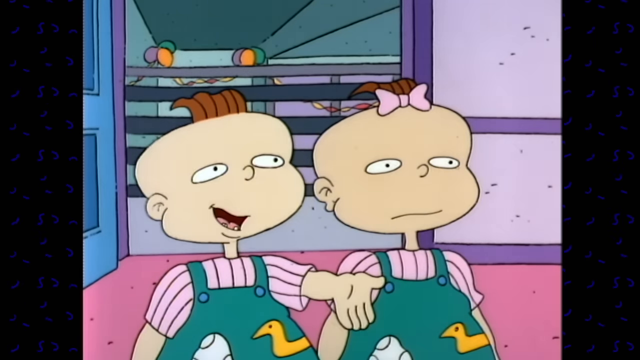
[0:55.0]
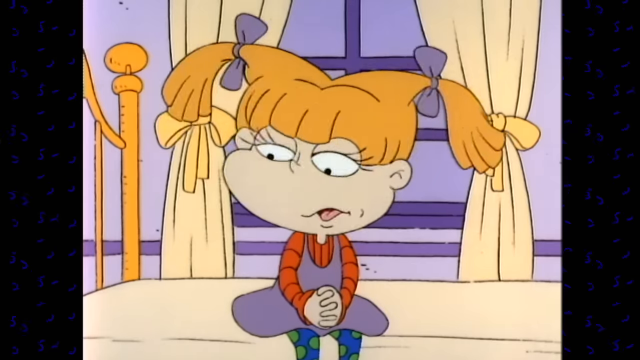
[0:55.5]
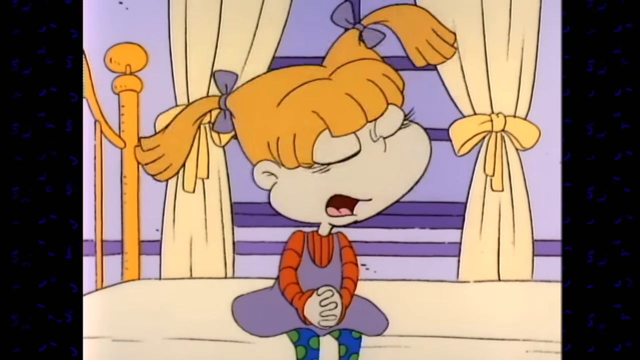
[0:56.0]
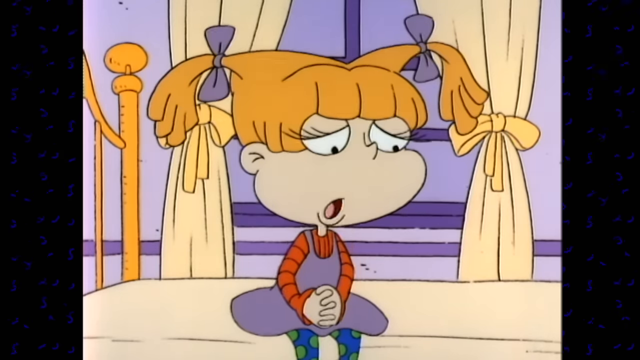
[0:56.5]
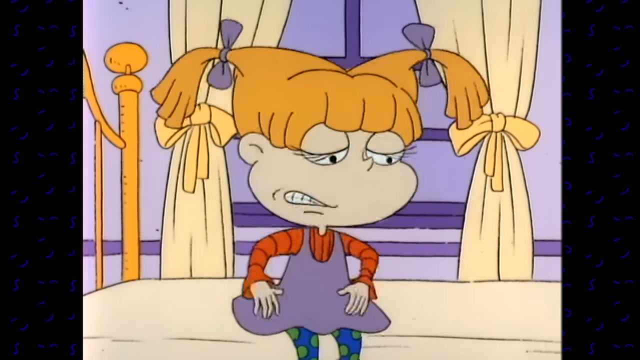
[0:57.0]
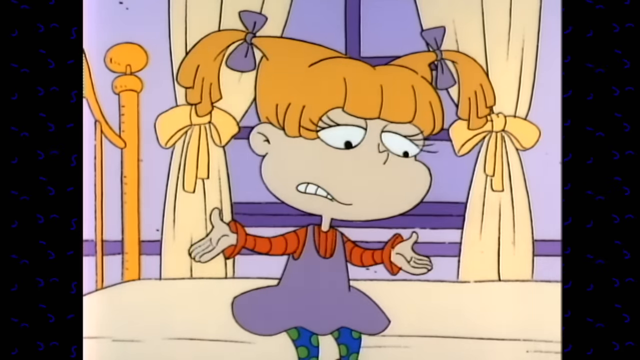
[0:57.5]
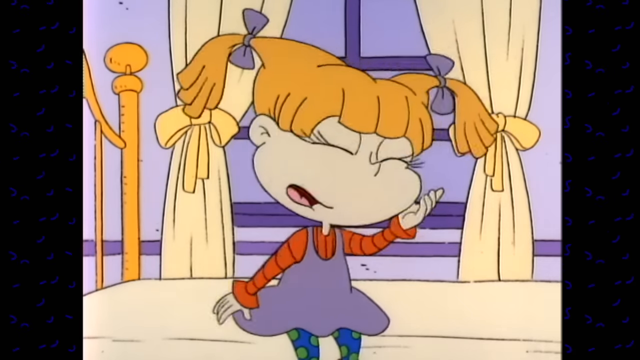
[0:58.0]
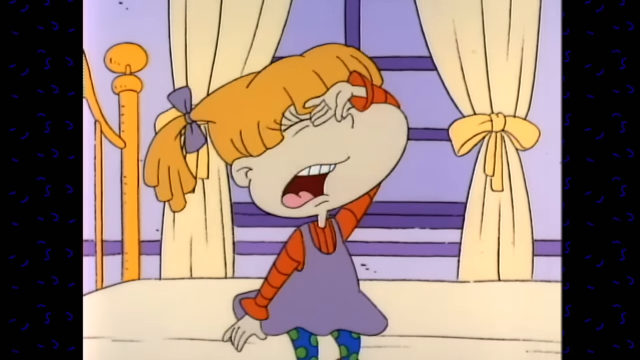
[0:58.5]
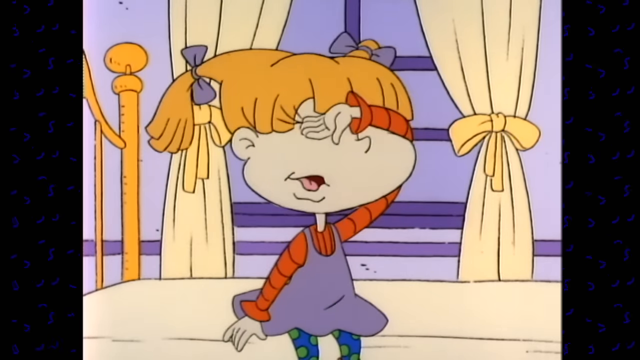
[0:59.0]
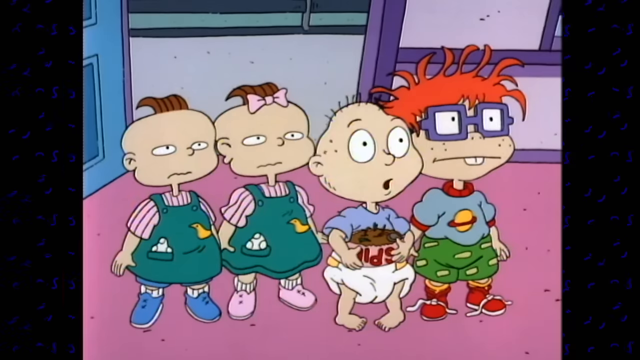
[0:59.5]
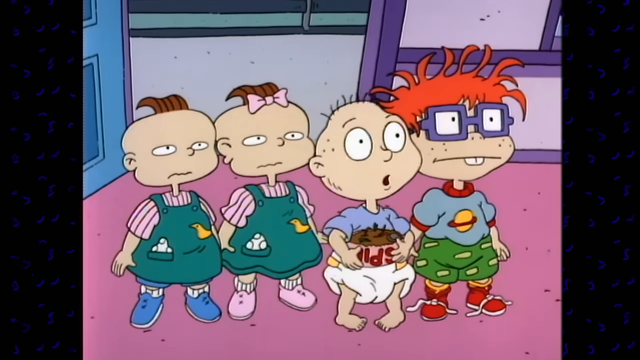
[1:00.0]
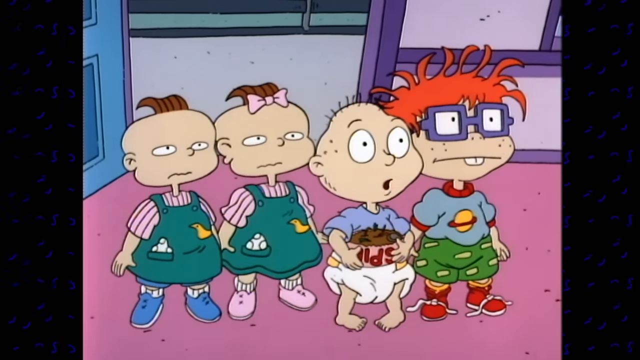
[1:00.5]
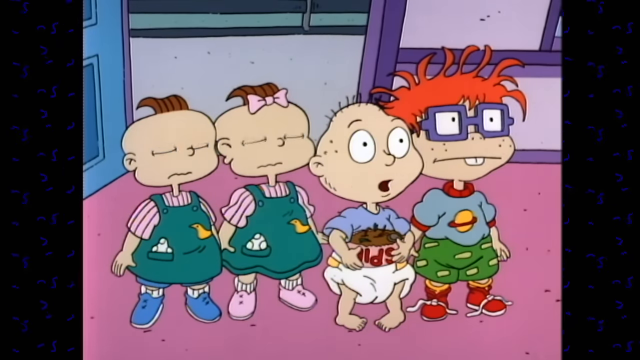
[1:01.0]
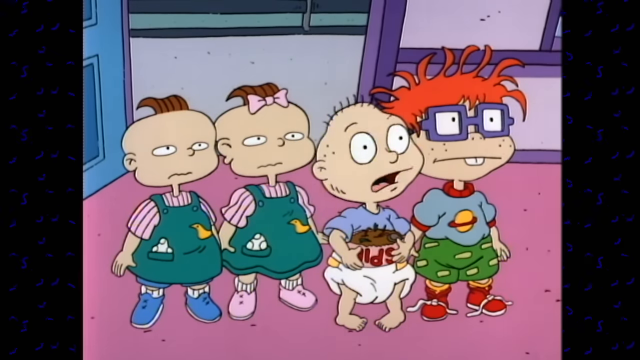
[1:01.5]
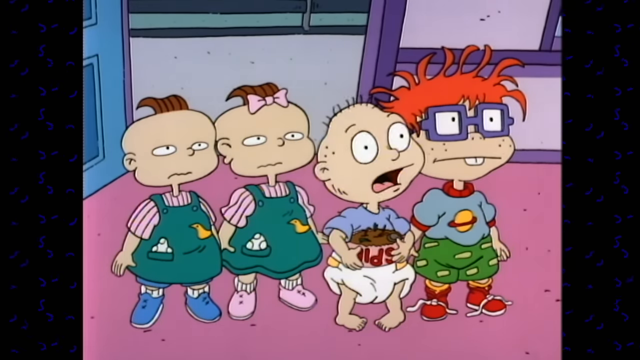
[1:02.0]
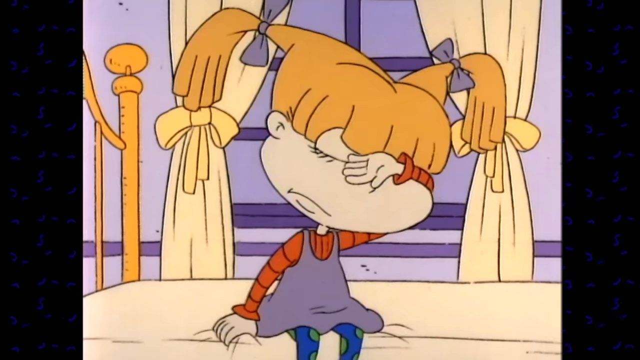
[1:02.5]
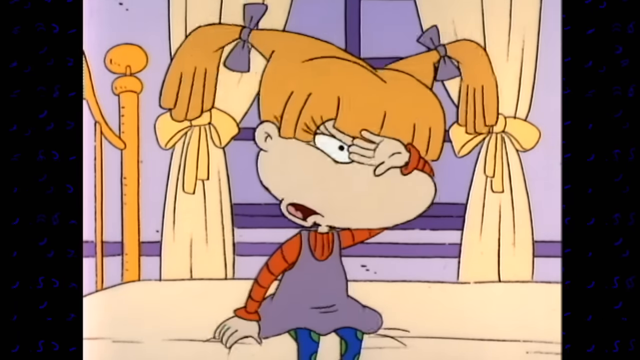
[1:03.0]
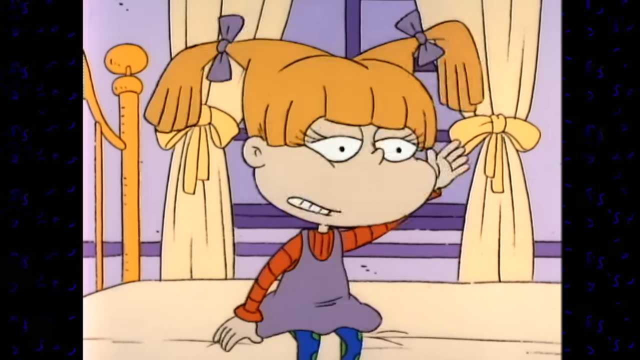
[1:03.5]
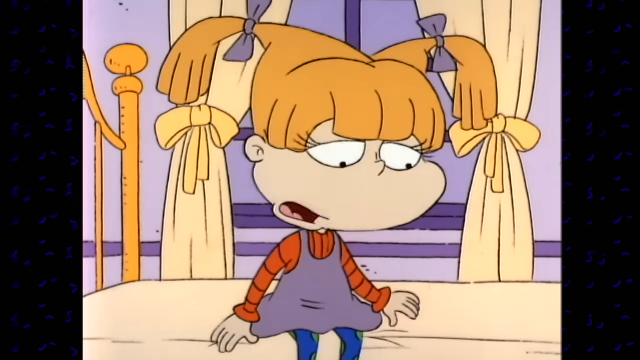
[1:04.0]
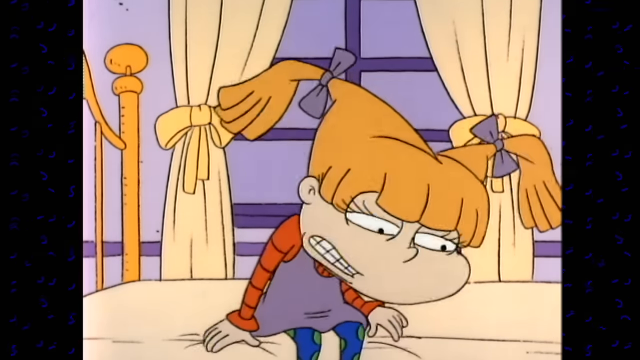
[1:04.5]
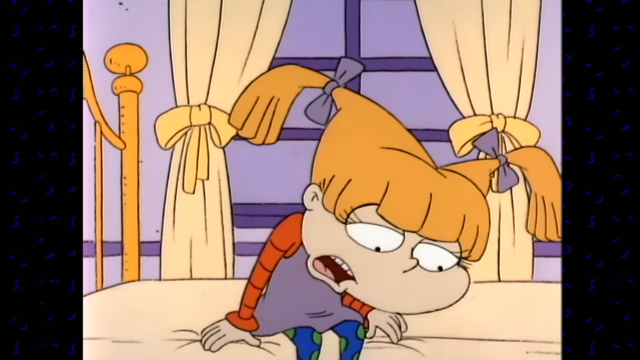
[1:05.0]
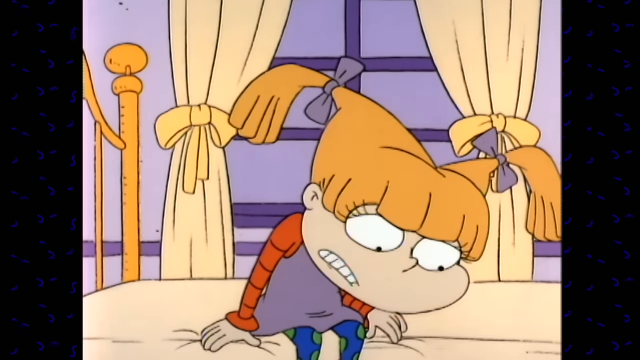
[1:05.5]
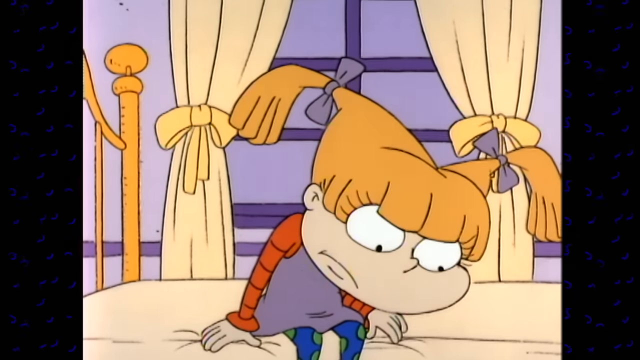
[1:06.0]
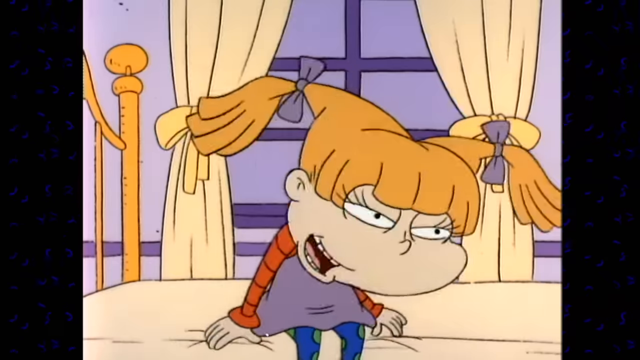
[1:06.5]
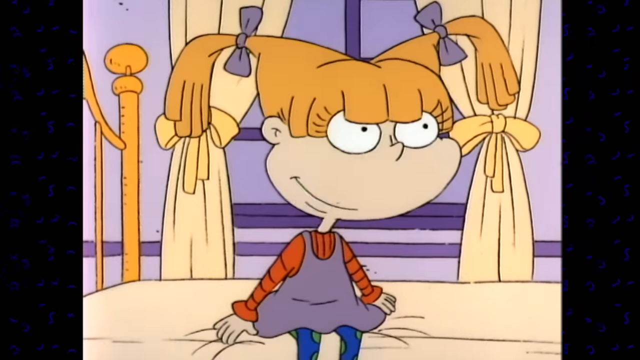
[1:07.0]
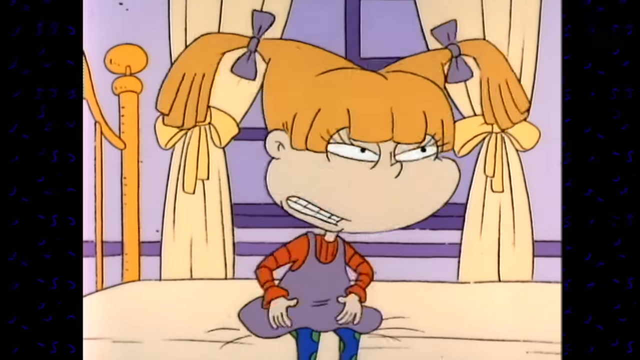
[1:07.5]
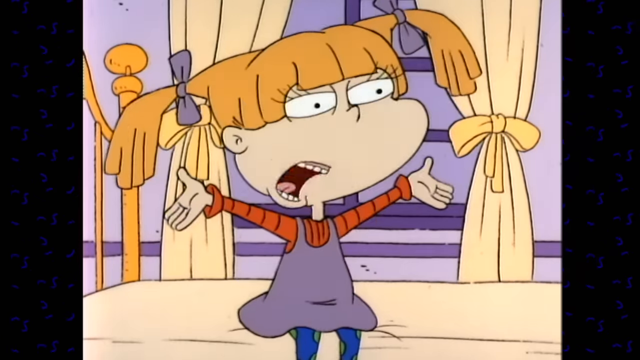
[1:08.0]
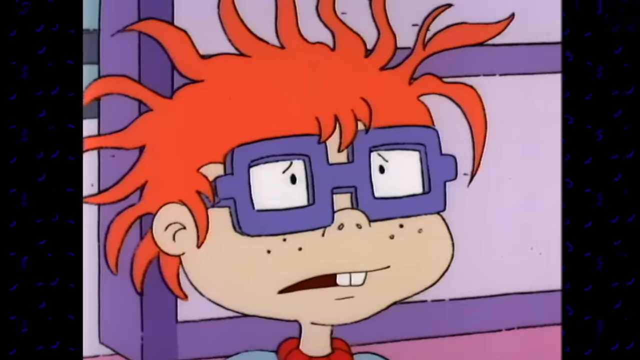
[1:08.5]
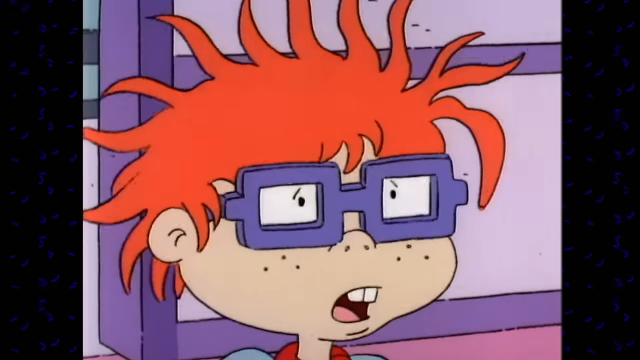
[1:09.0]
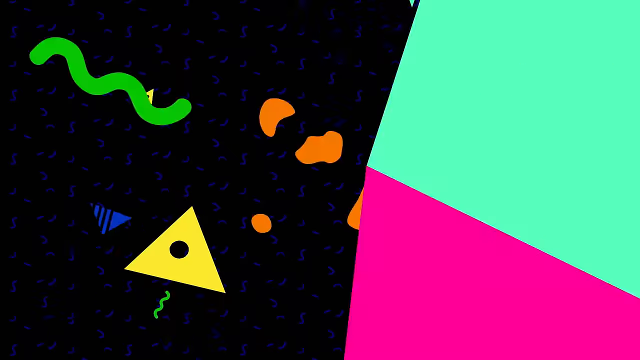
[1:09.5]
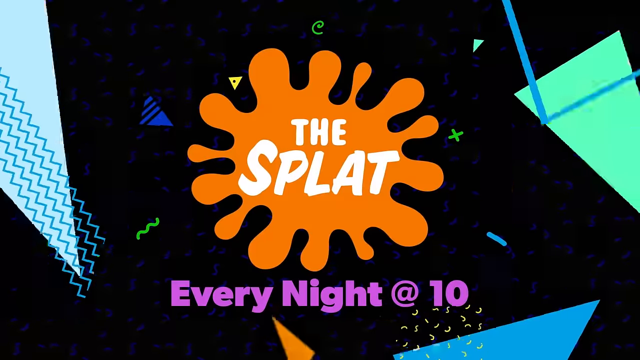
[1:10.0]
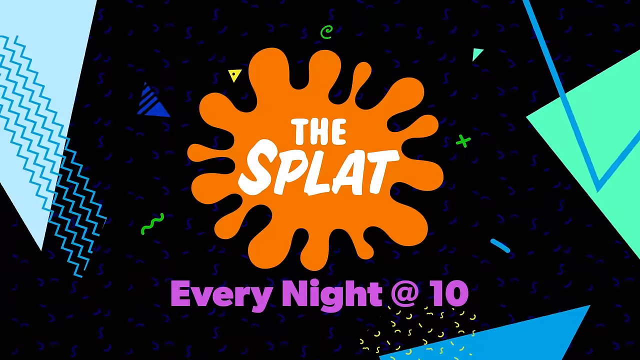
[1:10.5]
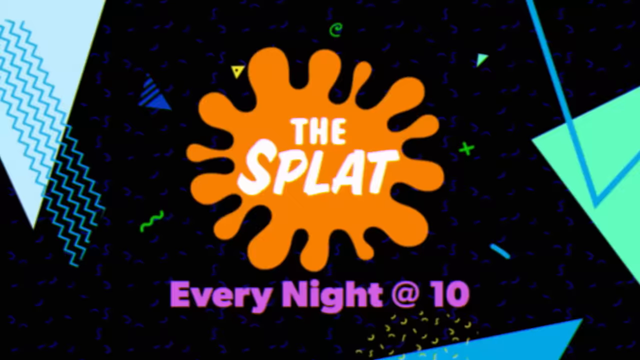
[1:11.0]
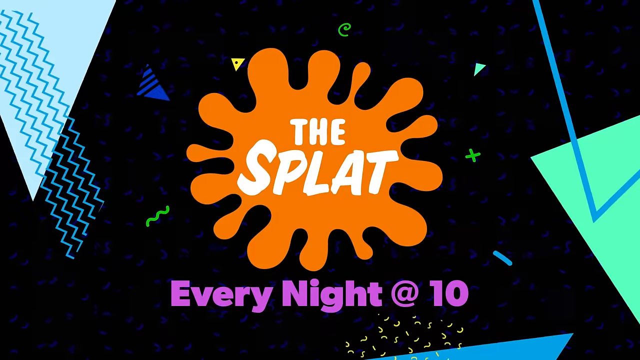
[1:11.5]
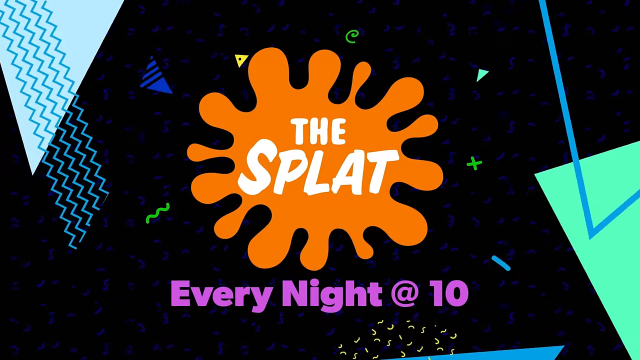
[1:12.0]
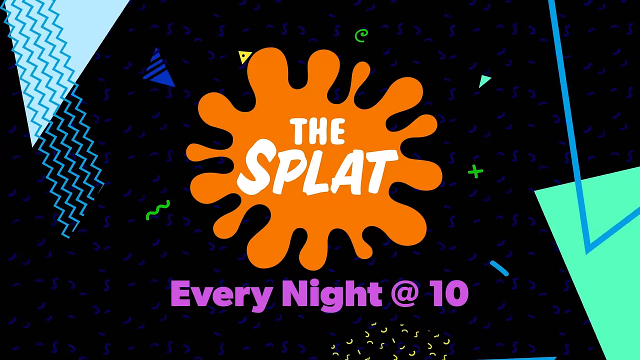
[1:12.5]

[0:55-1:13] The girl is still sitting on the edge of her bed and seems even more overwhelmed, with her hand kind of across her head, over her eyes. The kids are still talking to her, apparently trying to make her feel better. Whereas before only the twins and the one with red hair were there, the one with the diaper and spiky hair is now back, holding the bowl of dirt and worms. She then has kind of a little smile on her face, and her arm movements suggest she is feeling a bit more positive. After she looks like she is feeling a little better, the screen cuts to a black screen with a big orange splat on it, advertising a show, with text reading "the splat" and "the splat every night at 10 o'clock".